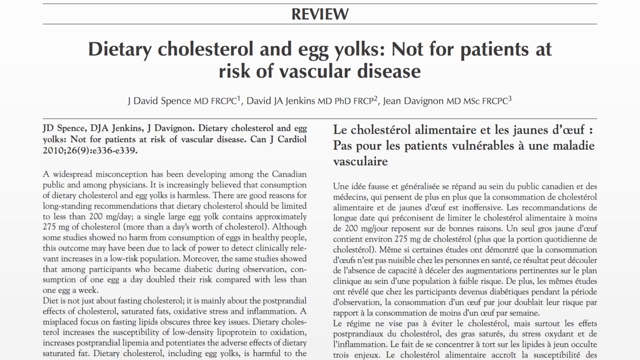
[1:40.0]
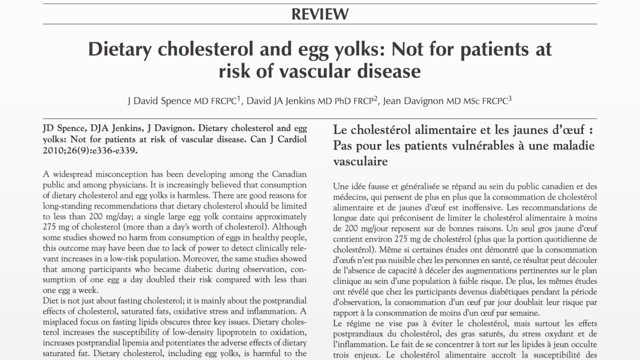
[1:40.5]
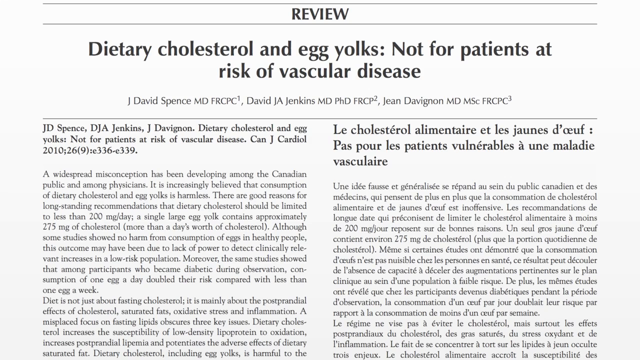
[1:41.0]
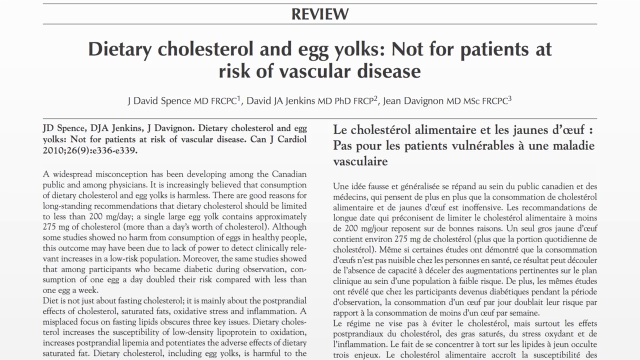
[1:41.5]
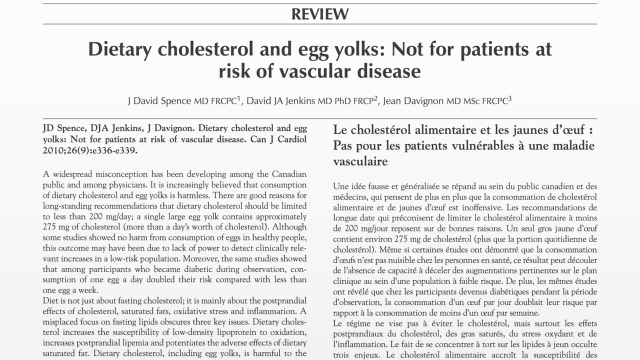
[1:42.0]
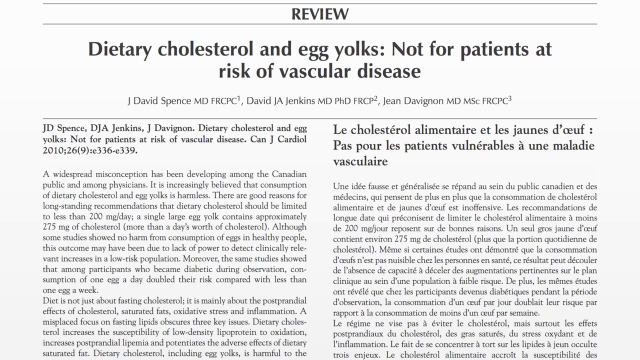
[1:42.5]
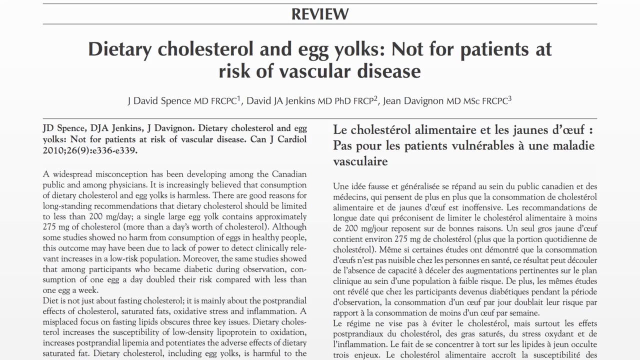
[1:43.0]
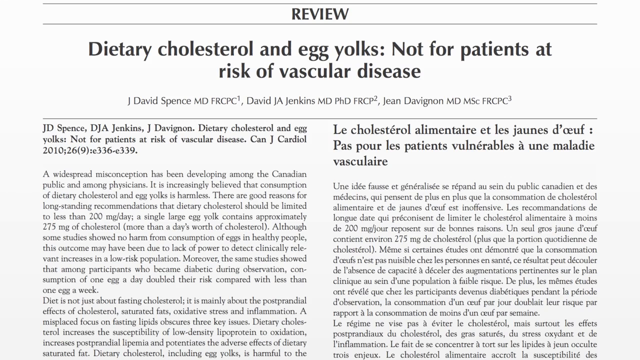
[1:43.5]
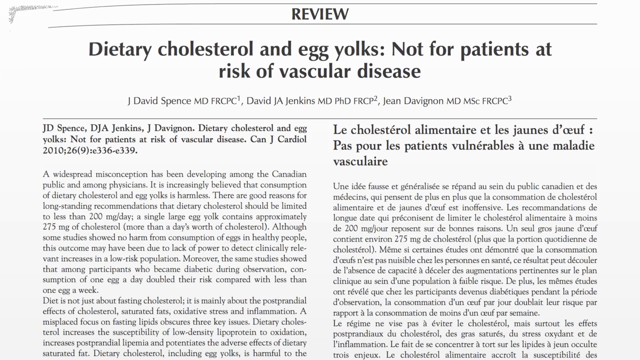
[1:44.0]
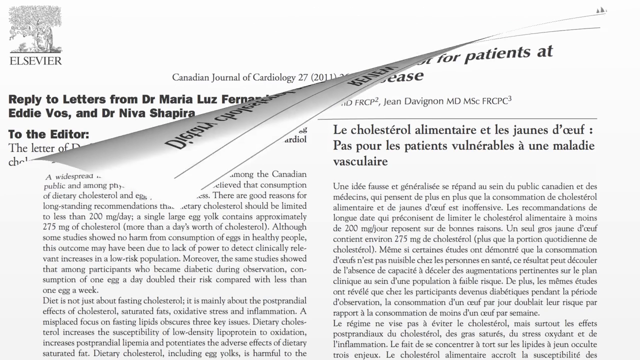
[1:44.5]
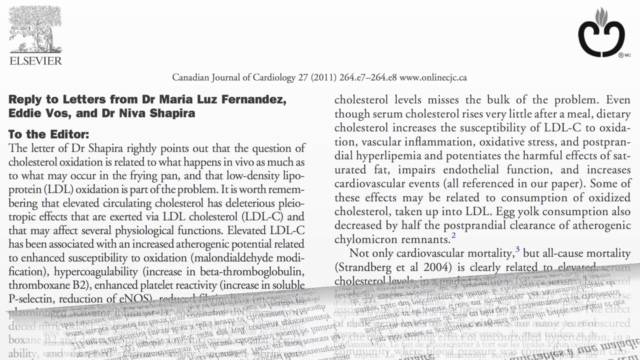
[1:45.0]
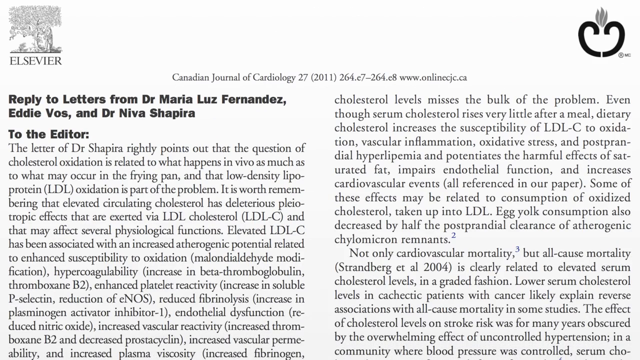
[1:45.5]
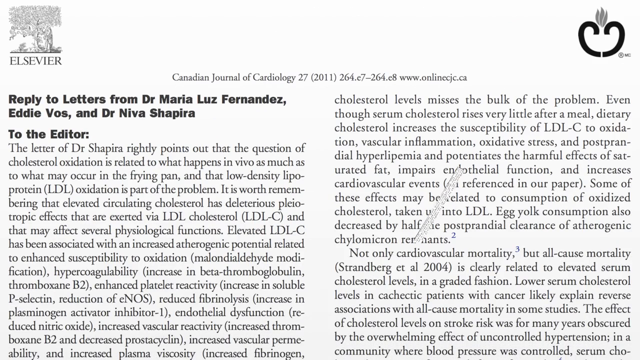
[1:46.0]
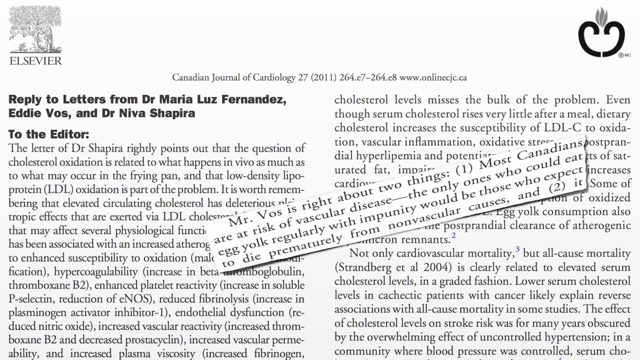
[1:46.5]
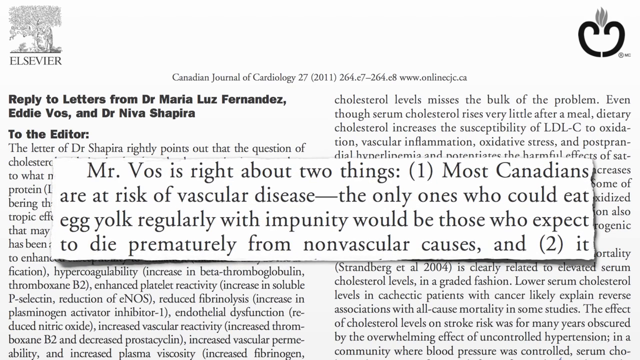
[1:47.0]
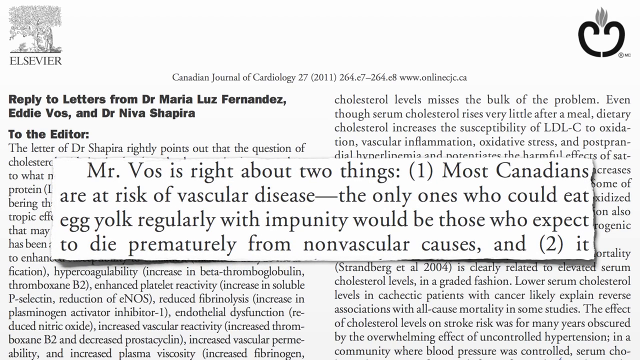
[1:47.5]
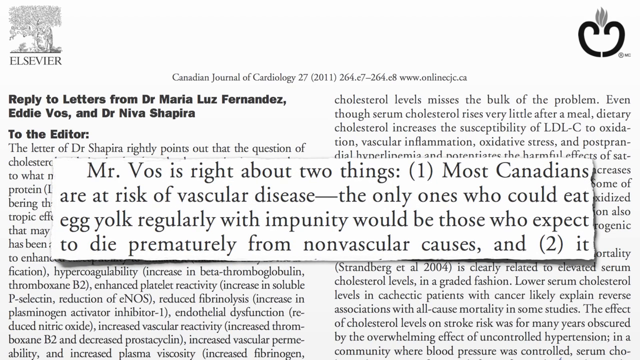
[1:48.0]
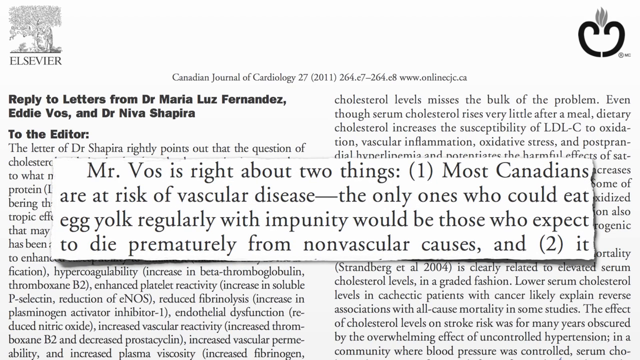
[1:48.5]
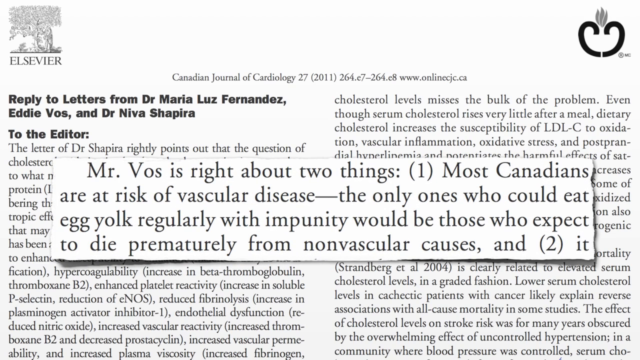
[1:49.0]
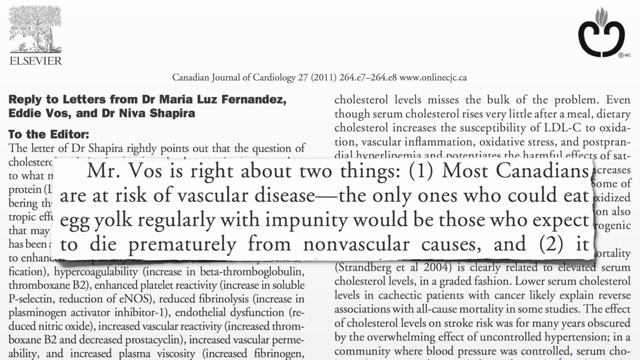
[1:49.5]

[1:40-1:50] A white page shows a review titled "dietary cholesterol and egg yolks not for patients at risk of vascular disease", written in English in the left-hand column and in French in the right-hand column. After four seconds, a transition that looks like a page turn starts from the top left corner of the screen: the page folds over itself and is pulled downward to the right, revealing another journal article underneath. Its title reads "Reply to letters from Dr. Maria Luz Fernandez, Eddie Vos, and Dr. Neva Shapira." The article has two columns and is entirely in English. From the middle right-hand side of the screen, a white rectangle with black text spins in, enlarges and covers the middle portion of the screen, with text including "those who expect to die prematurely from non-vascular causes"; the text ends partway through a sentence.